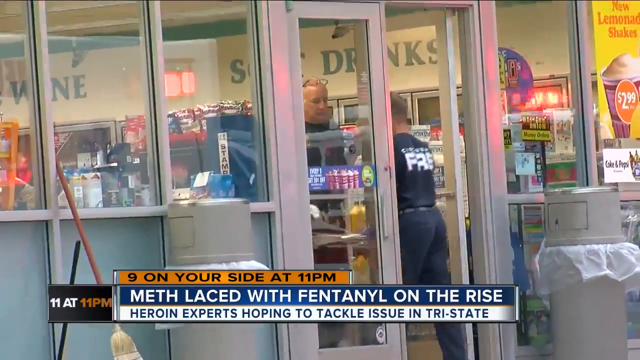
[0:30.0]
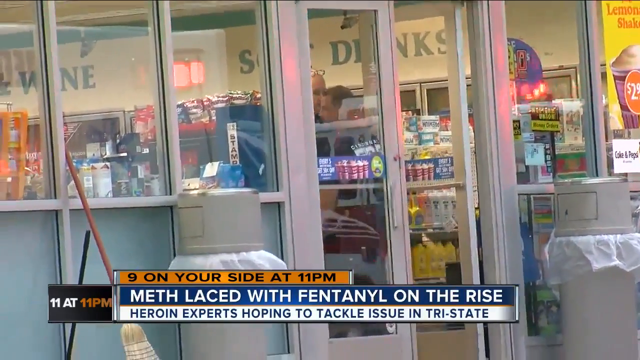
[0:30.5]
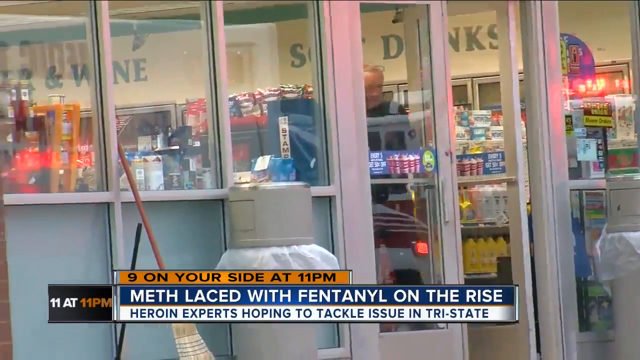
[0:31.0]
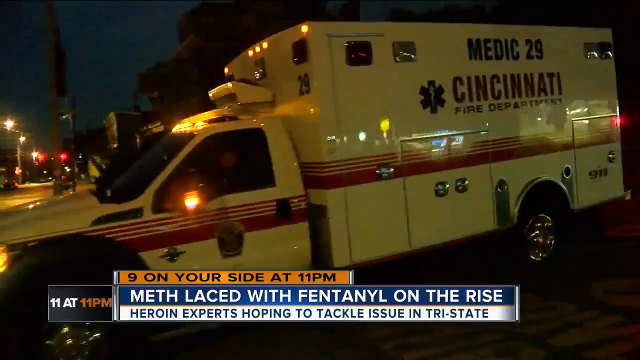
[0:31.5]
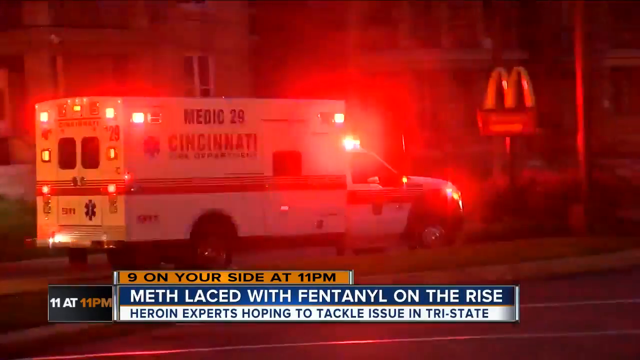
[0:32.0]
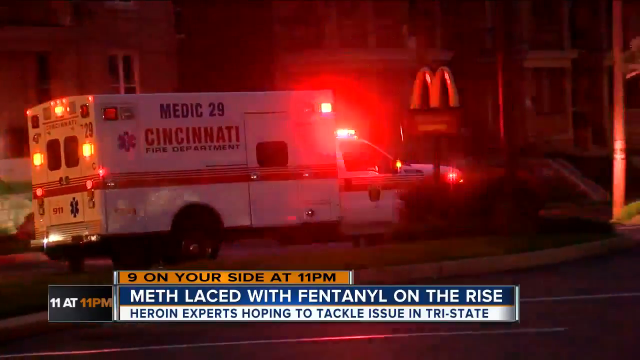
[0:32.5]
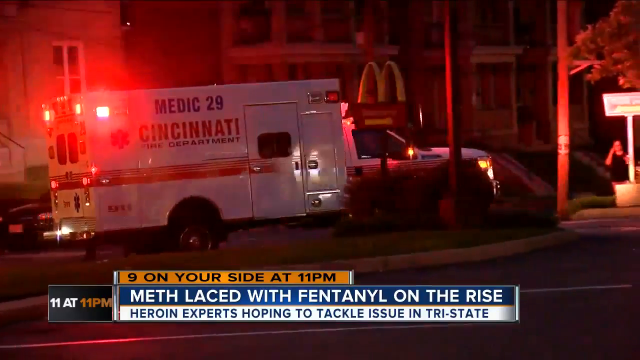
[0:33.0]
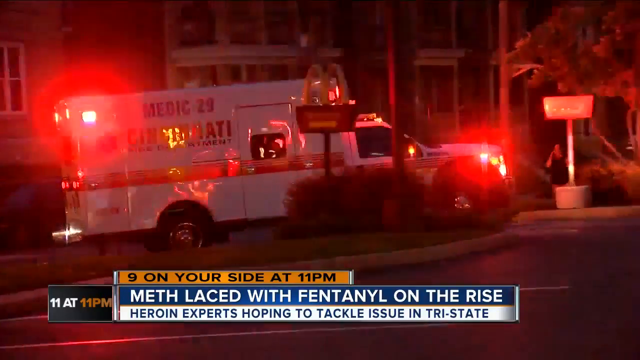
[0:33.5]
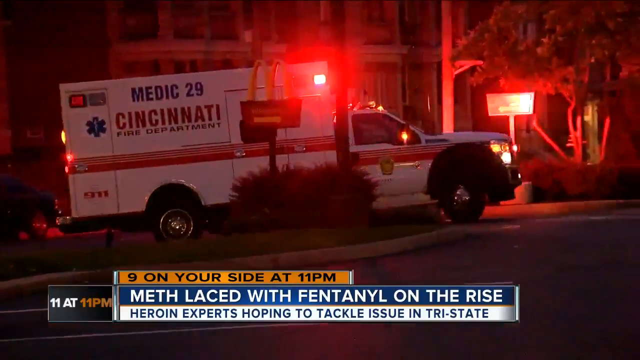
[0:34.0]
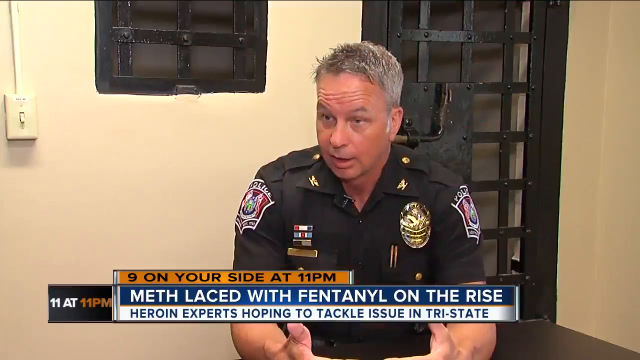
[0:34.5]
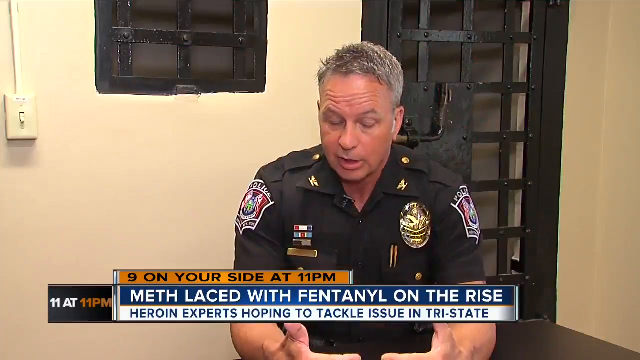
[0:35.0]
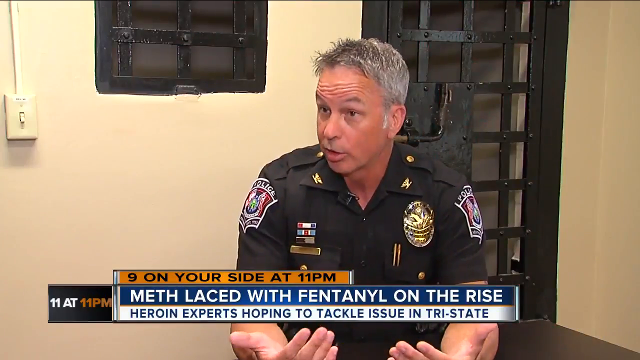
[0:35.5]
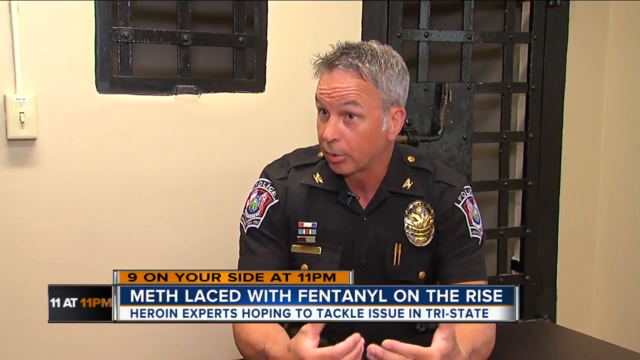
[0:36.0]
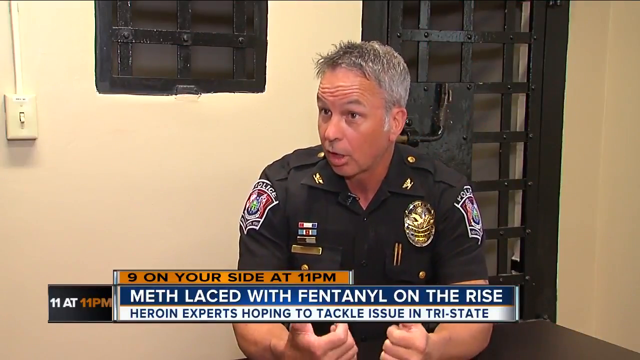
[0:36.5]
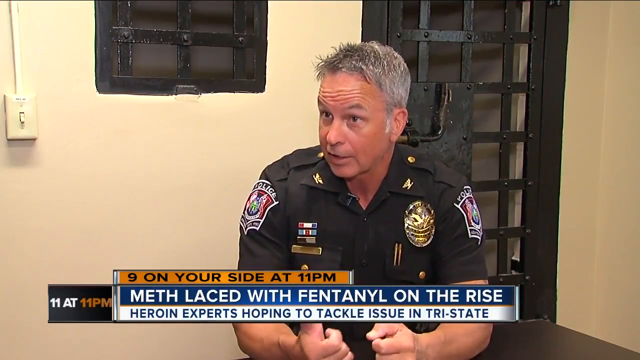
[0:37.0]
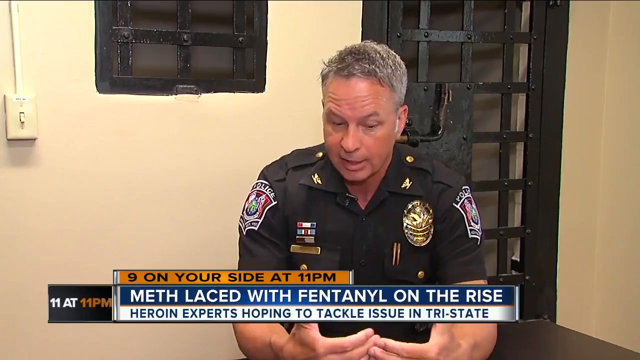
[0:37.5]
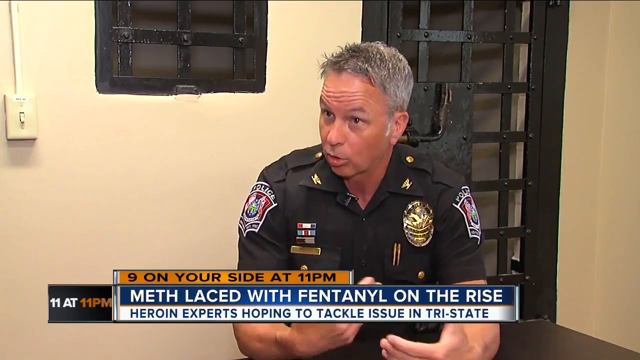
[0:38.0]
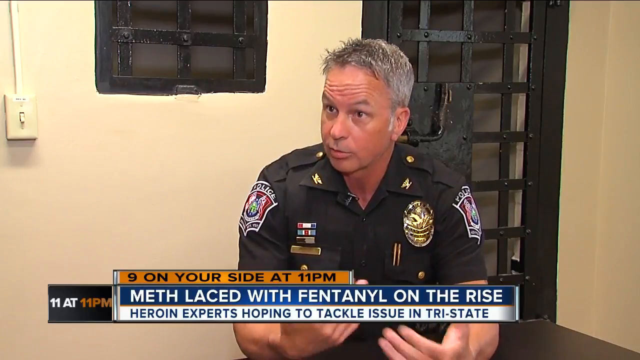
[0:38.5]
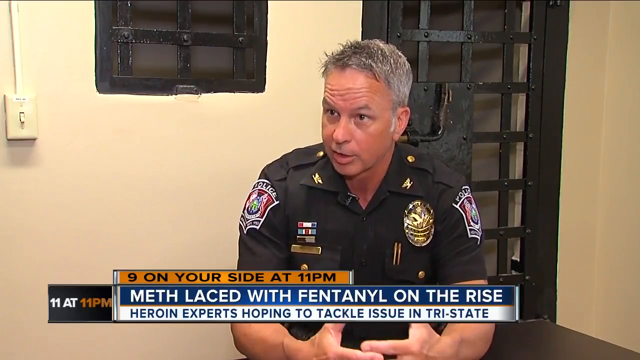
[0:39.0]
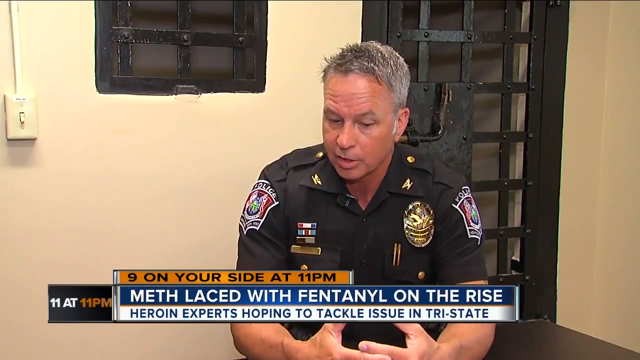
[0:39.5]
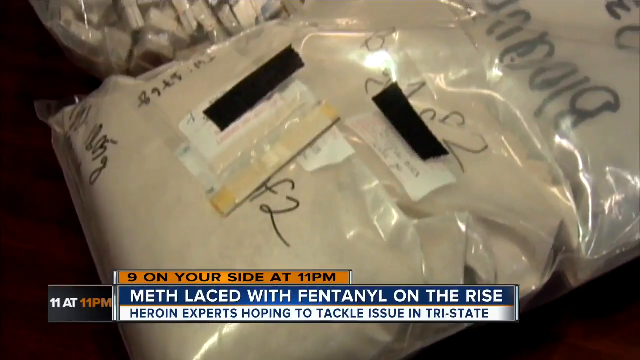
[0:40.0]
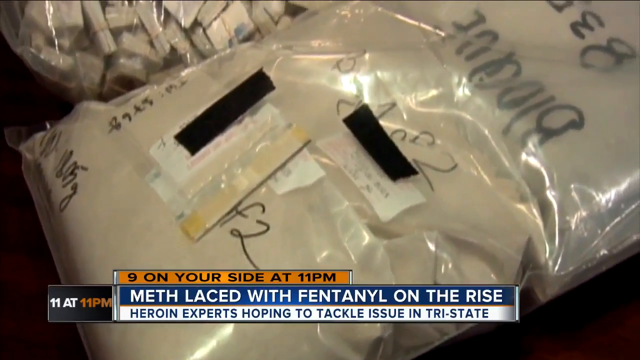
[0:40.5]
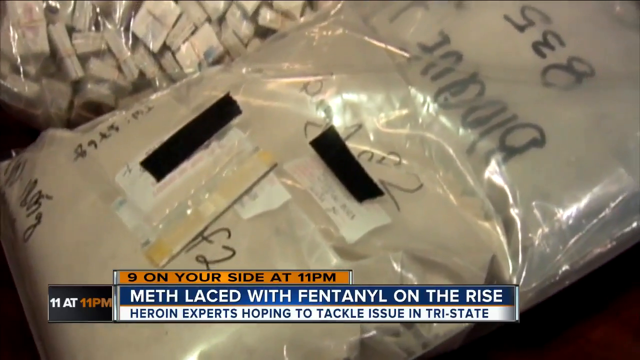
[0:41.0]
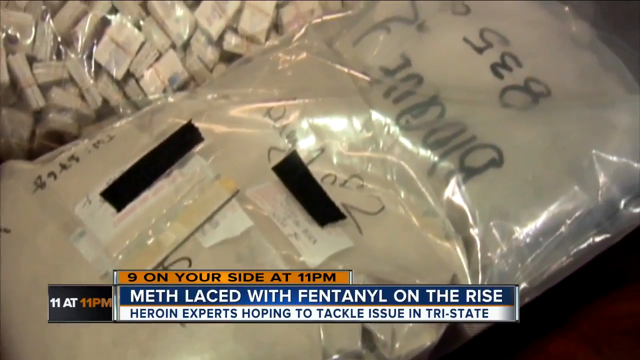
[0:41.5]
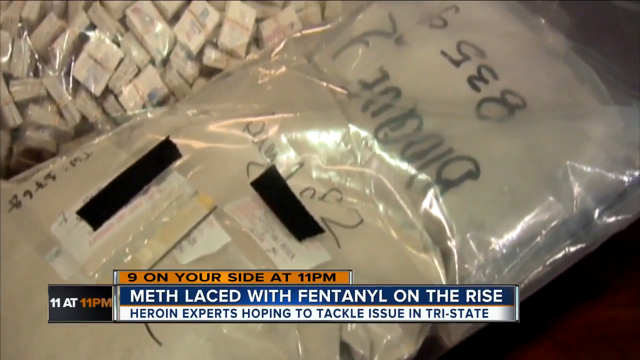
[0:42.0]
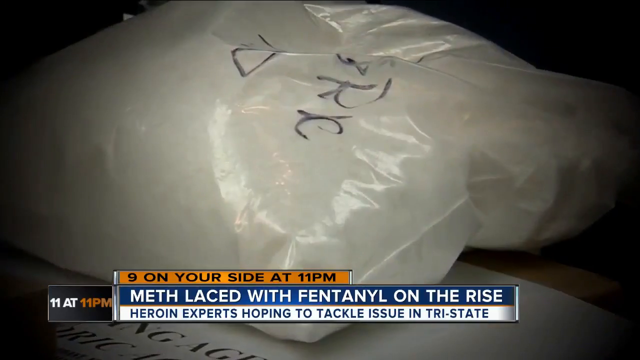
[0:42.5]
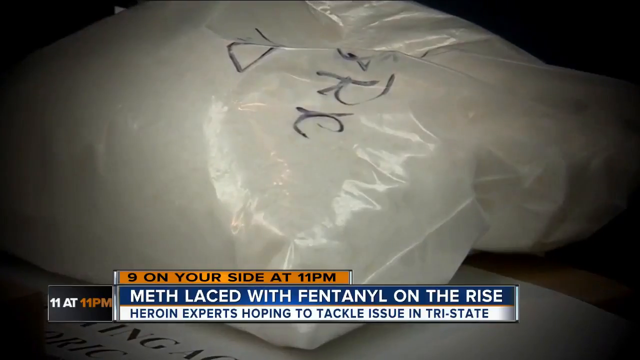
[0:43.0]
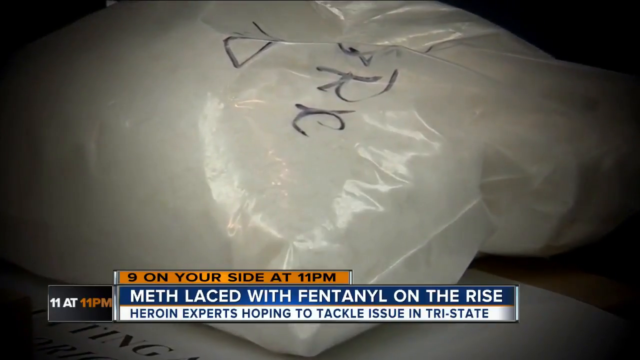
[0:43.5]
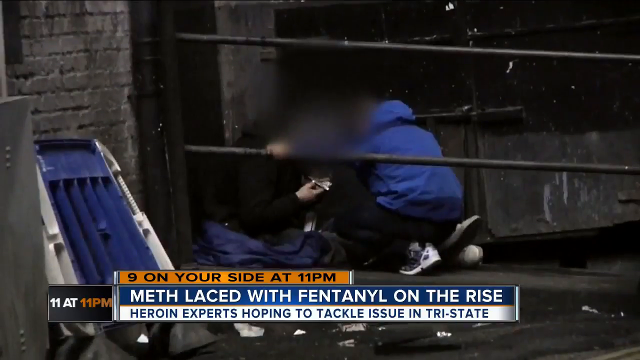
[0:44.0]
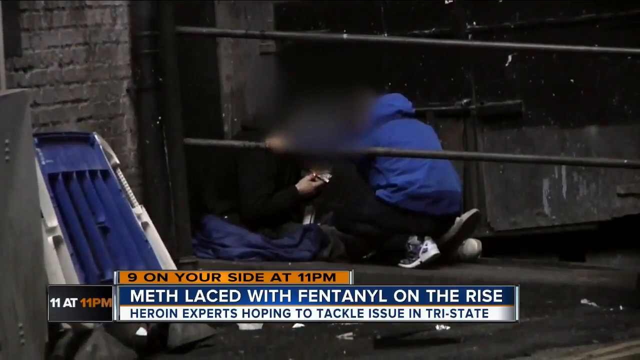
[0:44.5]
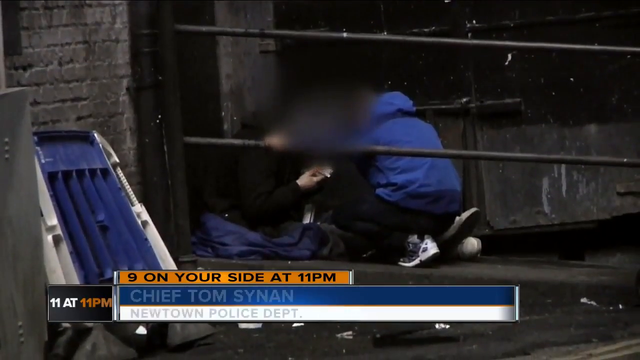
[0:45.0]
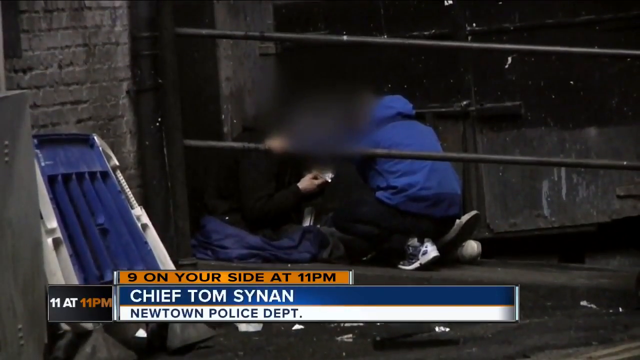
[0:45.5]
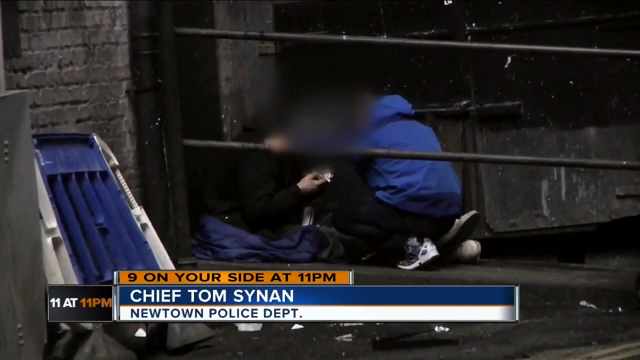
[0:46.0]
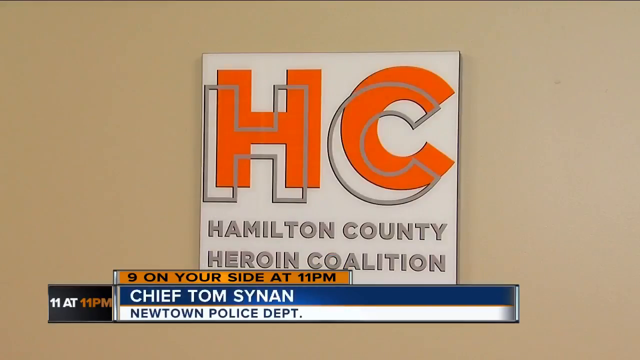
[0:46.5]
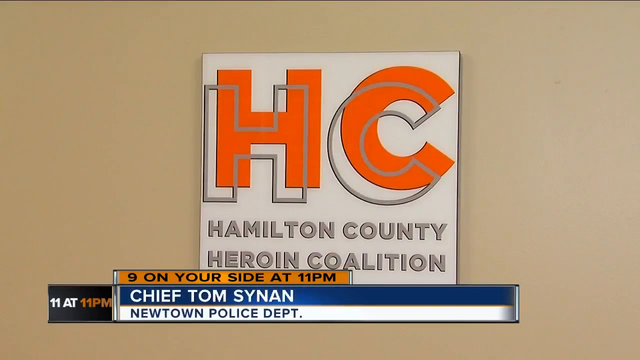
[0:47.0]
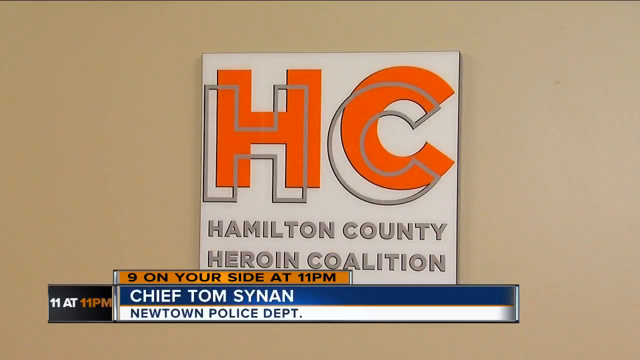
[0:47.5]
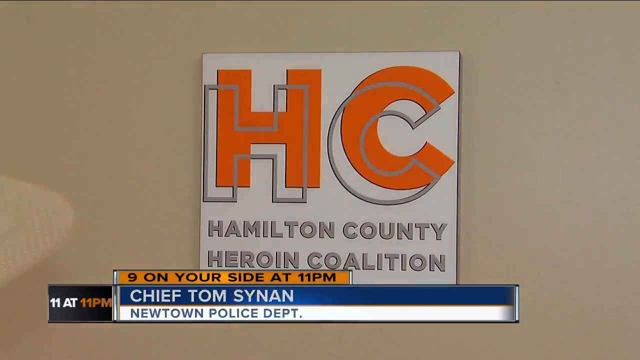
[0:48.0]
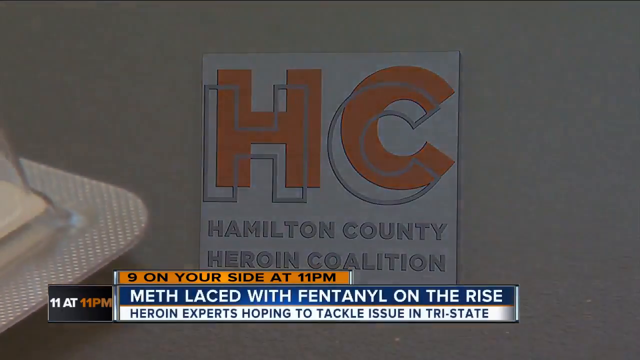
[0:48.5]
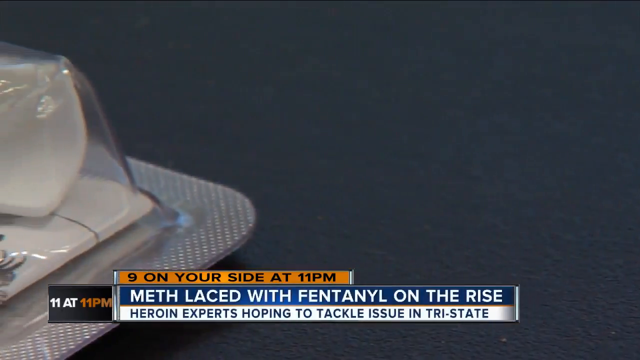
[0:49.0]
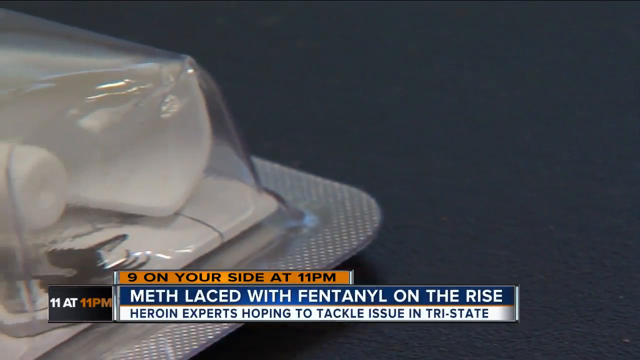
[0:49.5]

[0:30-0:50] A paramedic pushes a trolley through the door of what looks like a shop. At the bottom of the screen, a headline in white on a dark blue banner ends "fentanyl is on the rise", and beneath it a white banner with blue letters reads "heroin experts hoping to tackle the issue in tri-state". On the left of the screen is a black box with the logo "11 at 11 p.m." A Cincinnati ambulance with its lights on pulls out of the shops, passing a McDonald's. A policeman then talks to the camera; he is older, maybe in his fifties, with short black and white hair, and wears a police uniform. Close-ups follow of some bags apparently used for drugs. Next, two people with their faces blacked out are doing something at the back of what looks like an industrial building, which is very dark; one sits in a corner in a sleeping bag while the other is crouched over them. The next scene is the Hamilton County Heroin Coalition, whose sign on the wall is white with "HC" in outlined grey letters and orange letters behind it.